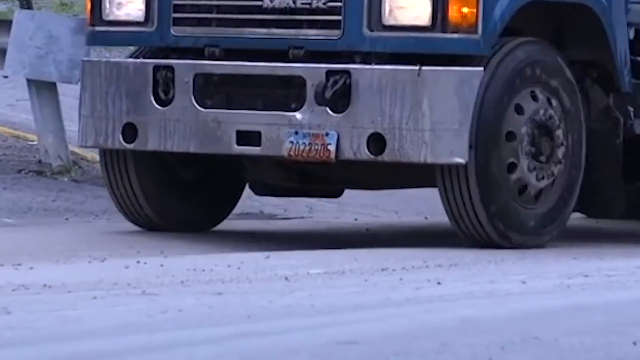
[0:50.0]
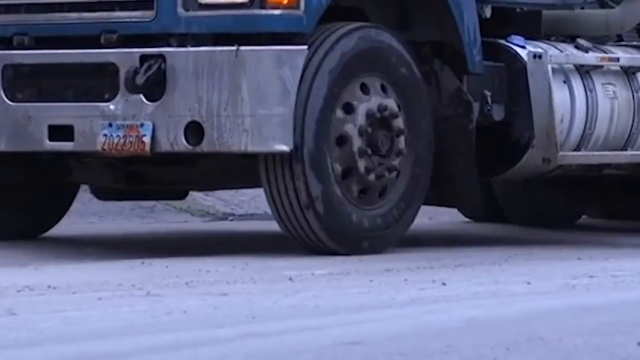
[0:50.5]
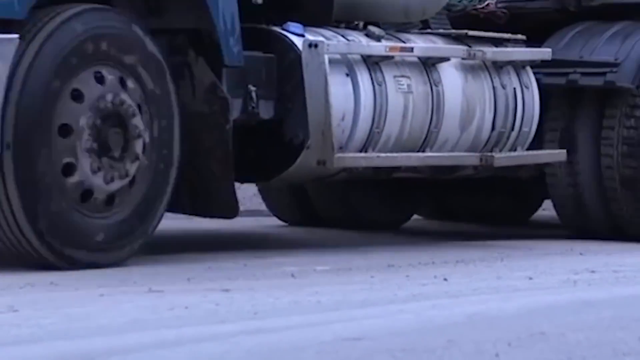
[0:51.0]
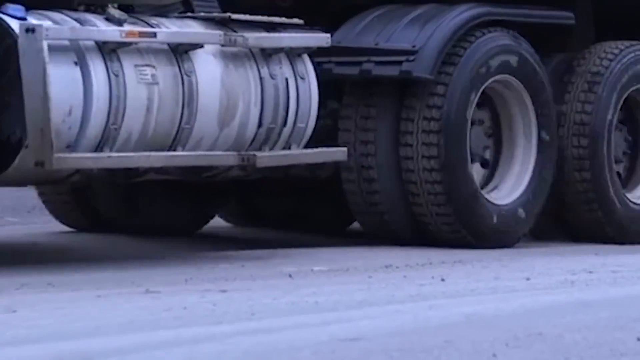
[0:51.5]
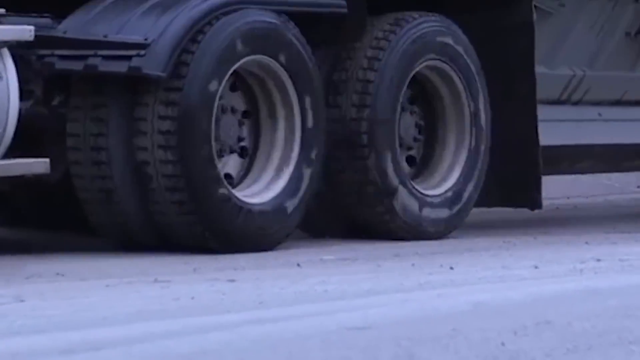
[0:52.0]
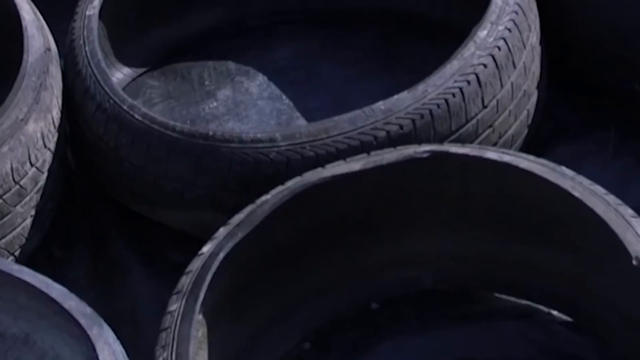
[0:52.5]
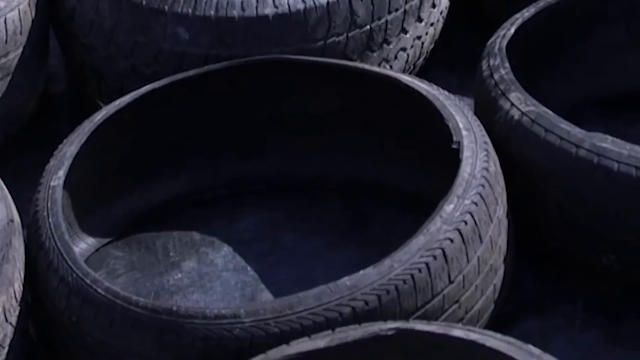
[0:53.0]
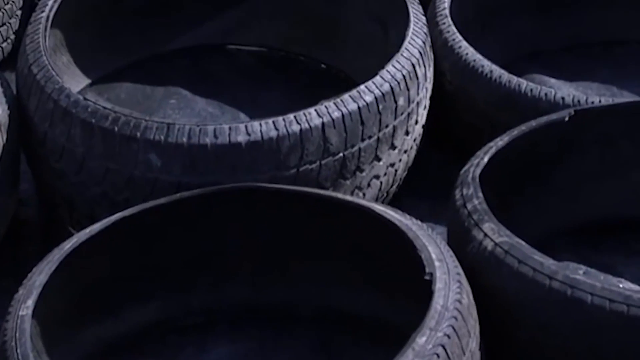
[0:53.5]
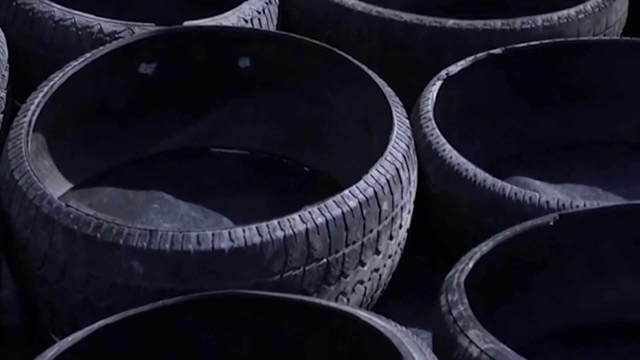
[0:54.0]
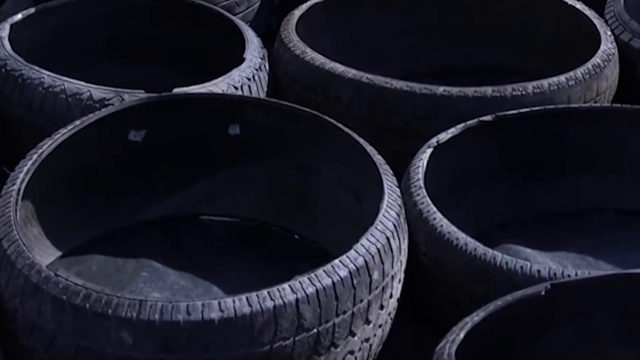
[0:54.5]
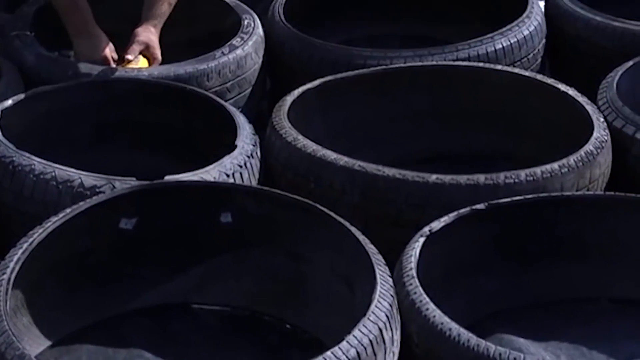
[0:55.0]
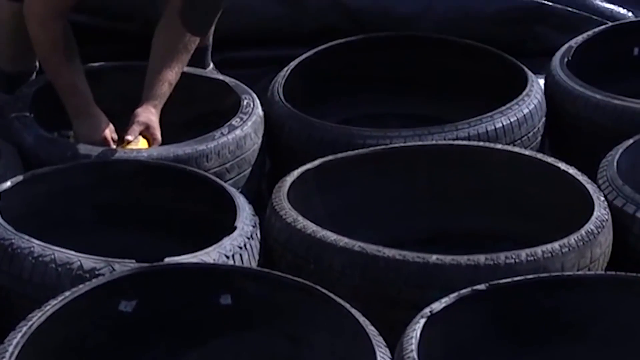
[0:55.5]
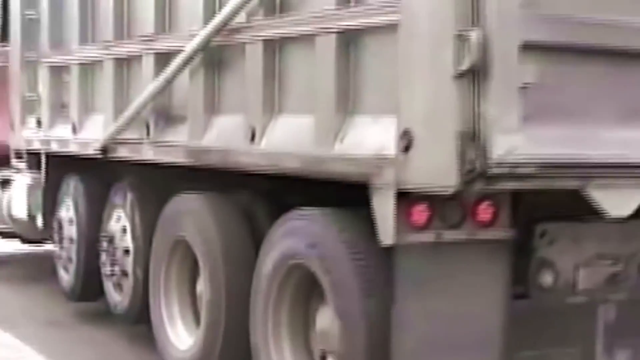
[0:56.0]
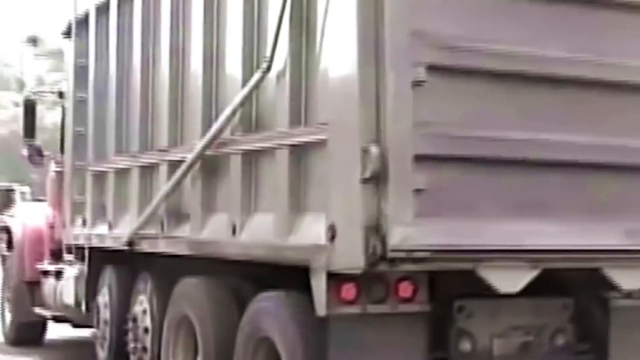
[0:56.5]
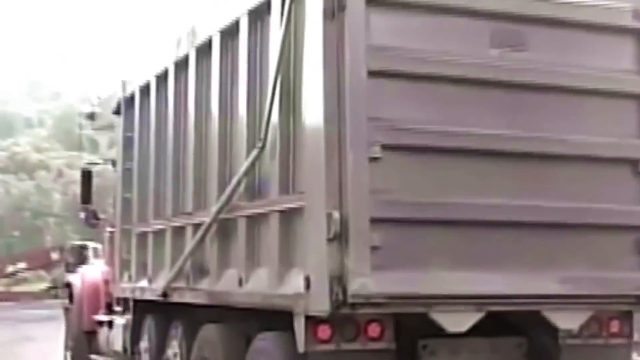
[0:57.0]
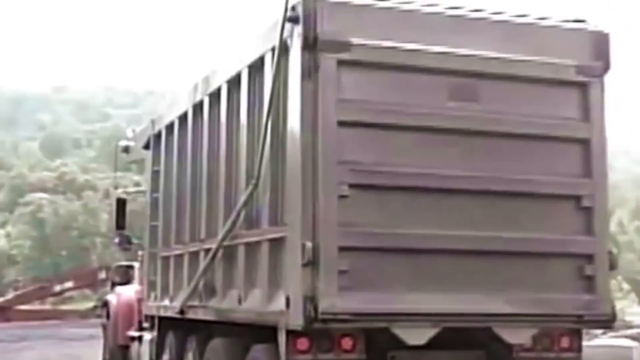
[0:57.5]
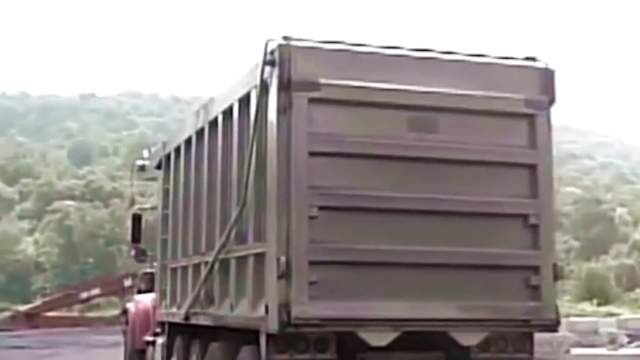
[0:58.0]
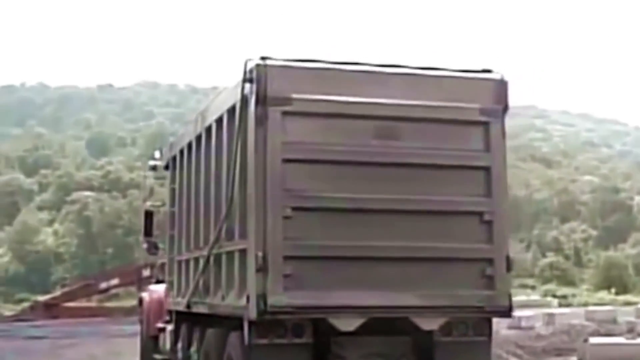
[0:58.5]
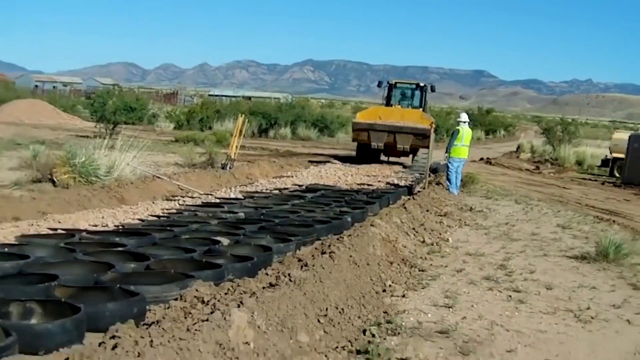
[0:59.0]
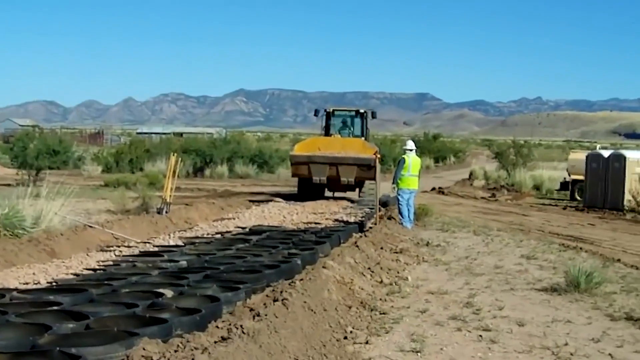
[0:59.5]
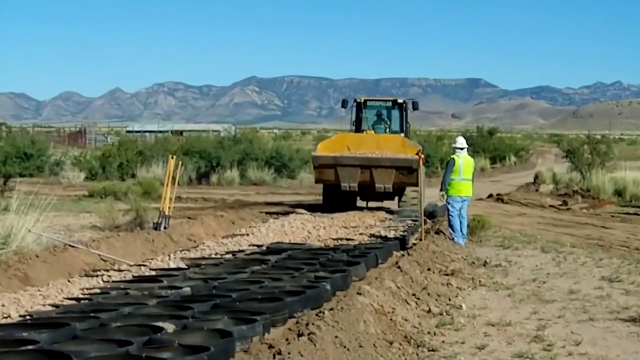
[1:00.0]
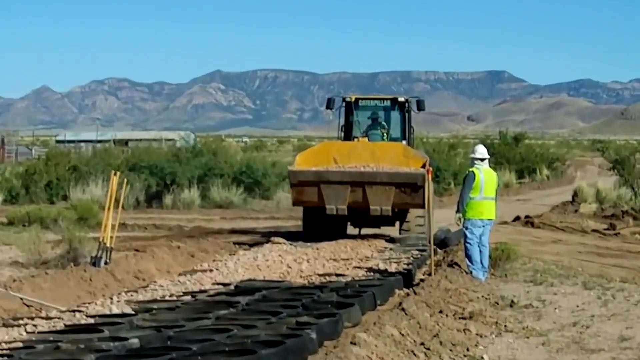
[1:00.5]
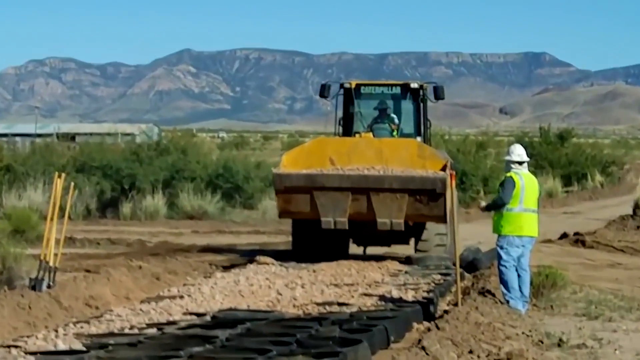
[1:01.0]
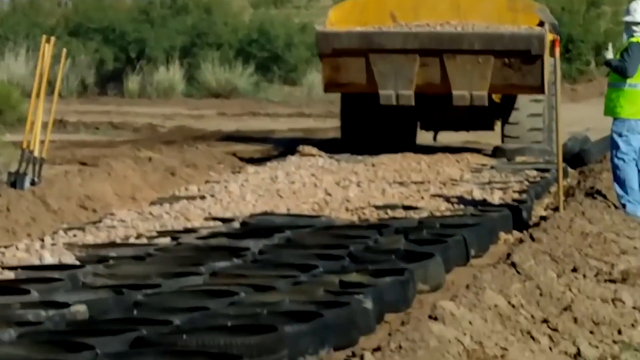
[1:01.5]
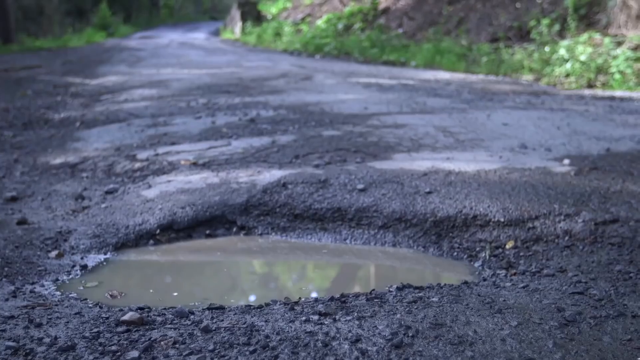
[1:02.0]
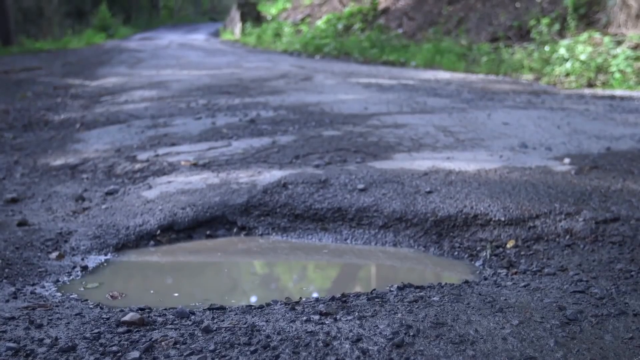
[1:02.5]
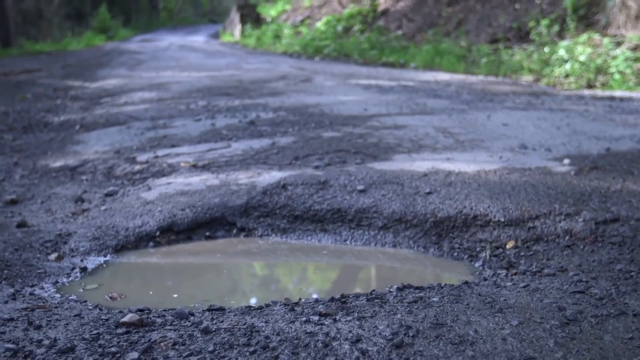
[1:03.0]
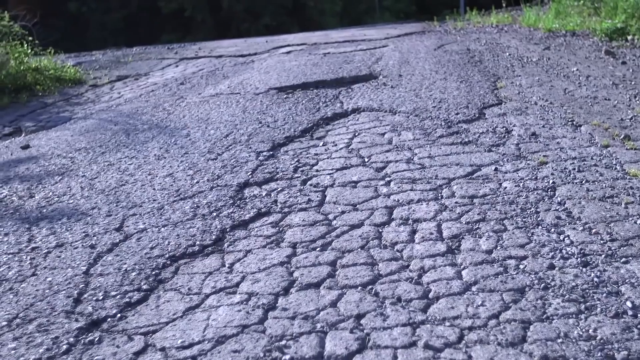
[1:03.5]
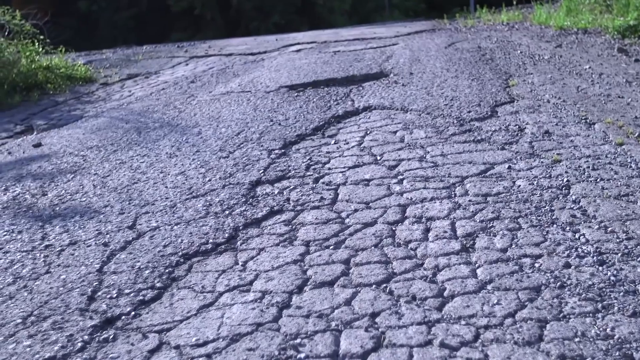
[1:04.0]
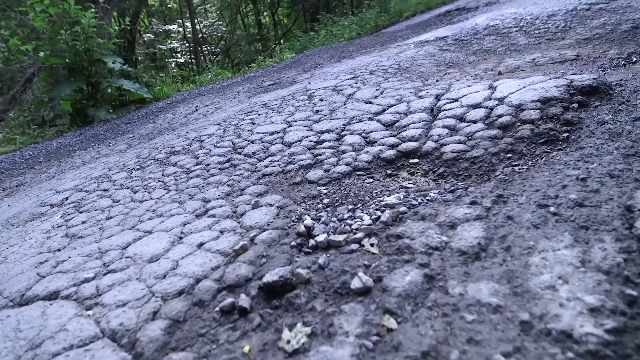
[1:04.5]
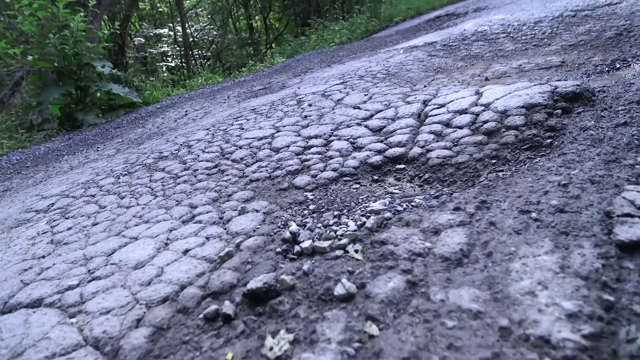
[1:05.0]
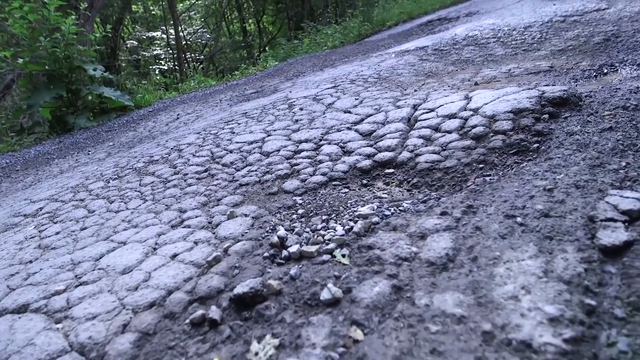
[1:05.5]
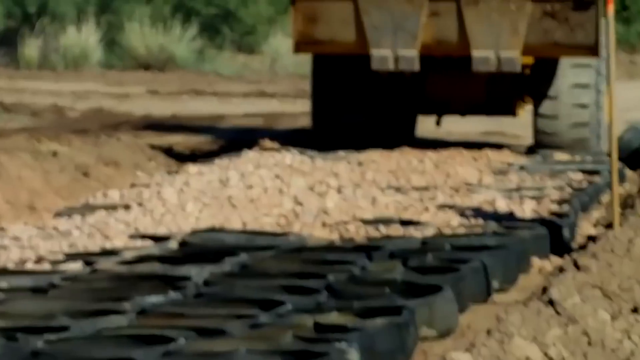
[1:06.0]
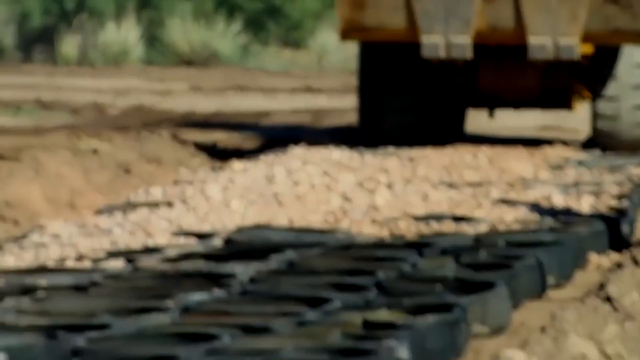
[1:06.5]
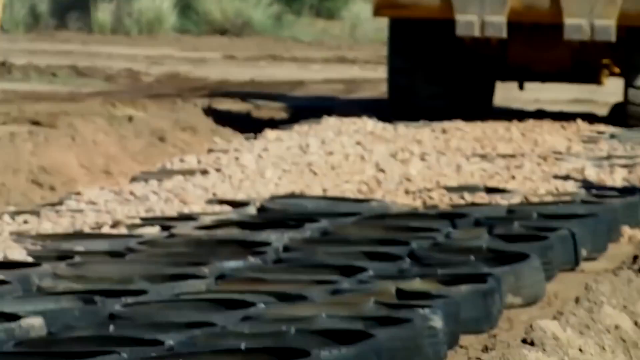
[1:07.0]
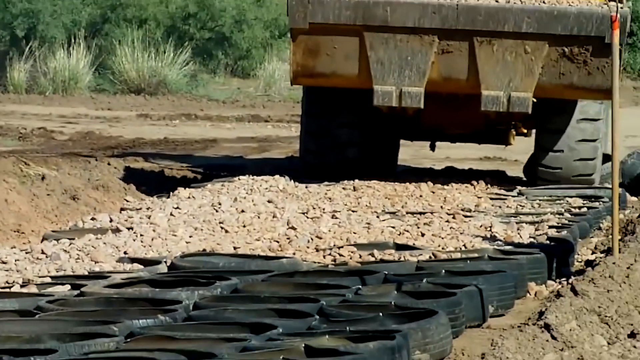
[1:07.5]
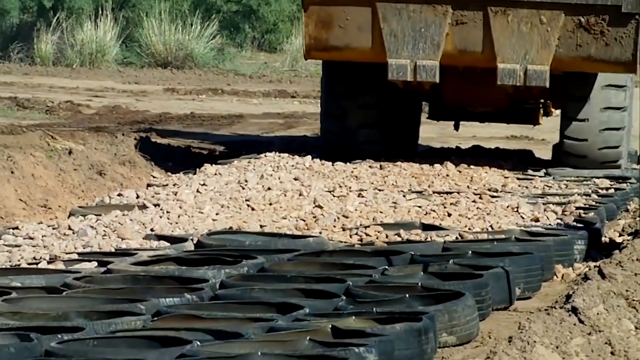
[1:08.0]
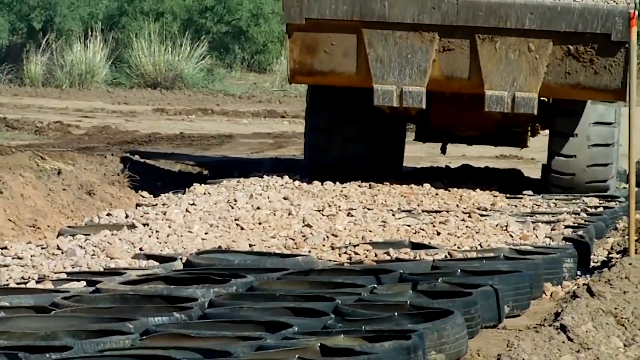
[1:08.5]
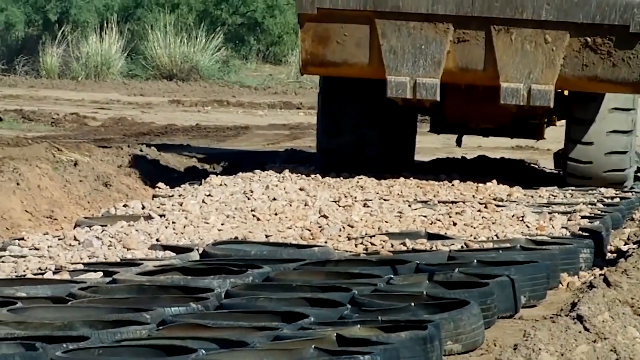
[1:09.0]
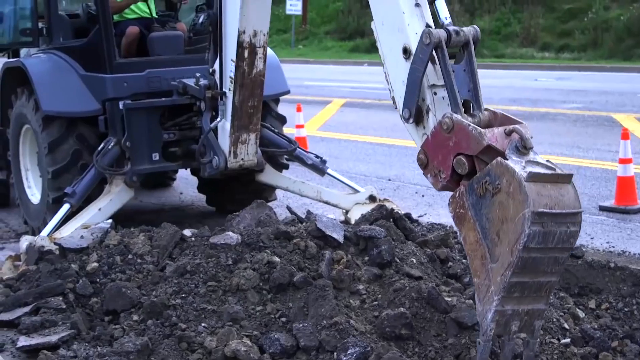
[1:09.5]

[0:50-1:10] A close-up of a dump truck's wheels transitions to its contents, which are the hollowed-out car wheels. A man seems to be sort of holding a yellow object against one of them. Several vehicles then leave the factory transporting these wheels. The wheels are shown being covered with dirt alongside roads. The video cuts to clearly worn-down asphalt roads with potholes filled with water; the surface is no longer smooth and looks all crackly like dried rocks. Then a big, heavy vehicle is again shown pushing rocks over the wheels.